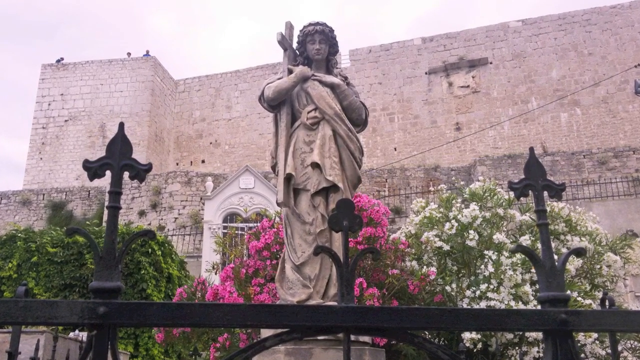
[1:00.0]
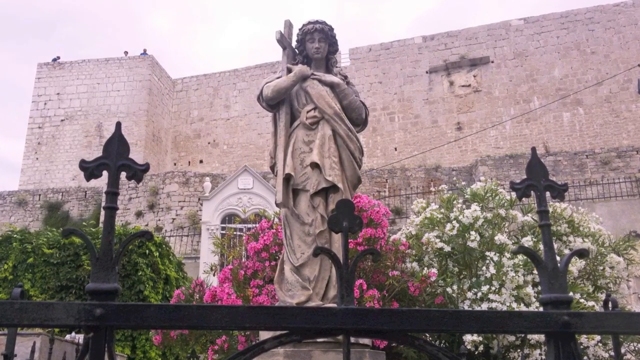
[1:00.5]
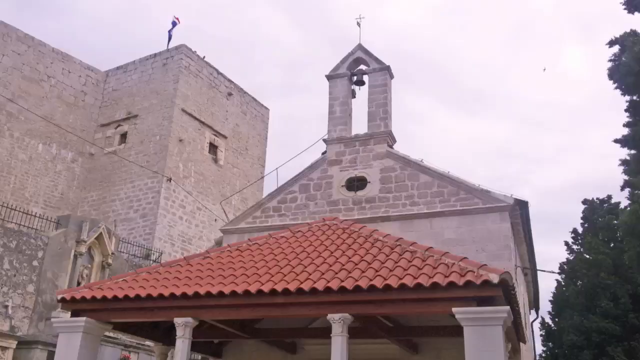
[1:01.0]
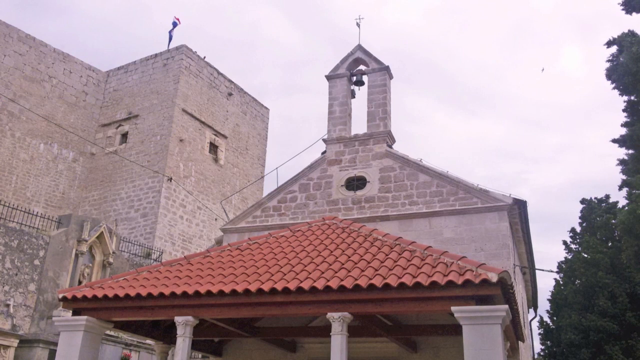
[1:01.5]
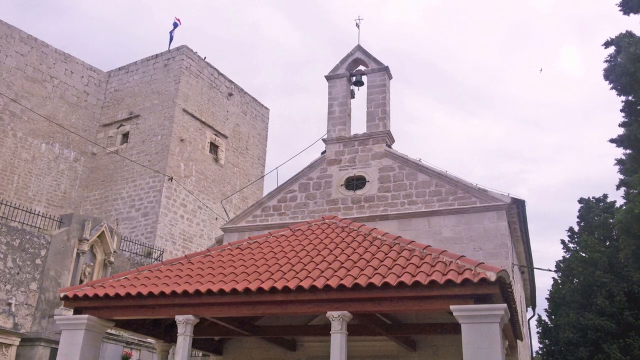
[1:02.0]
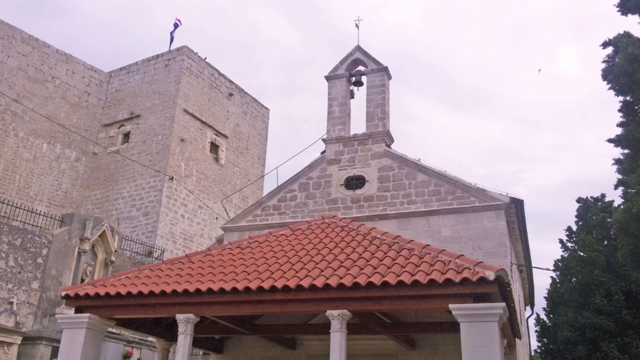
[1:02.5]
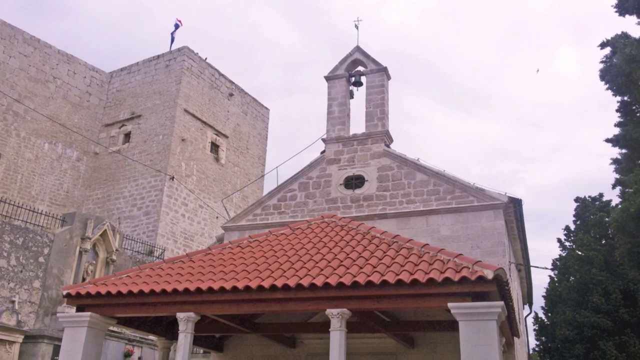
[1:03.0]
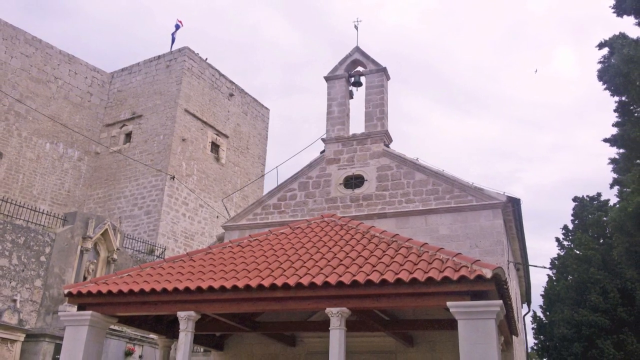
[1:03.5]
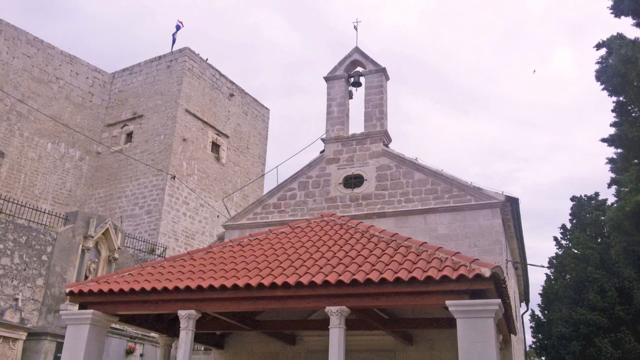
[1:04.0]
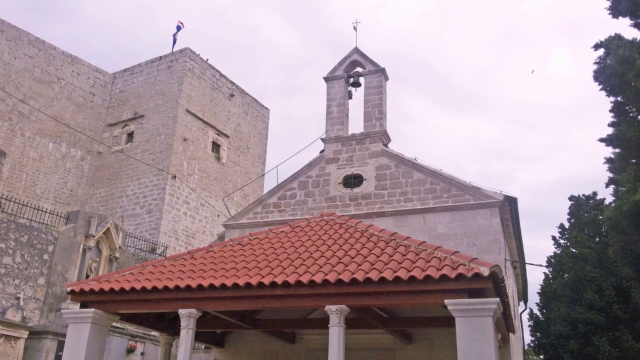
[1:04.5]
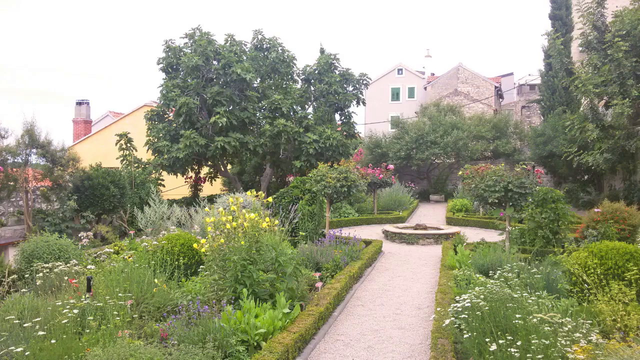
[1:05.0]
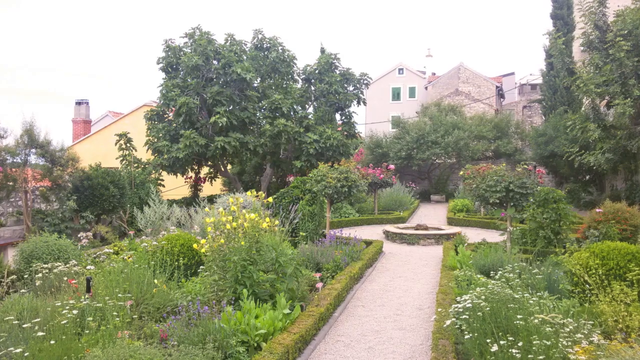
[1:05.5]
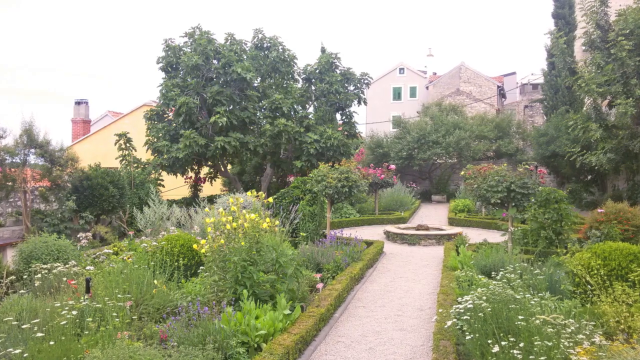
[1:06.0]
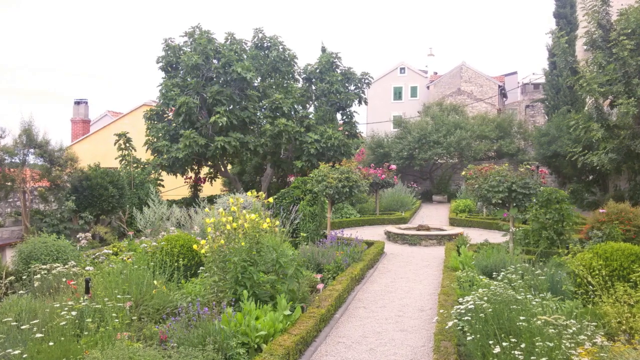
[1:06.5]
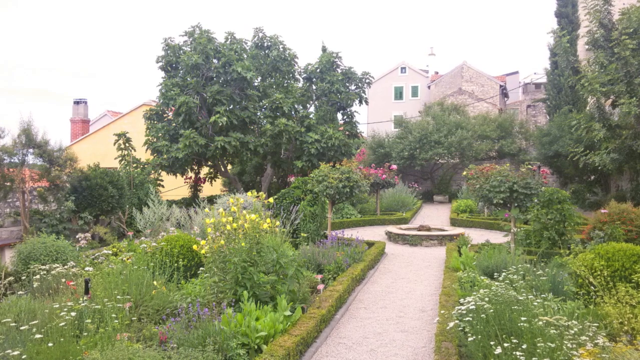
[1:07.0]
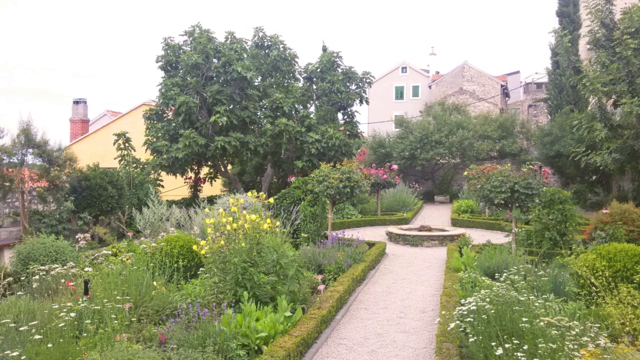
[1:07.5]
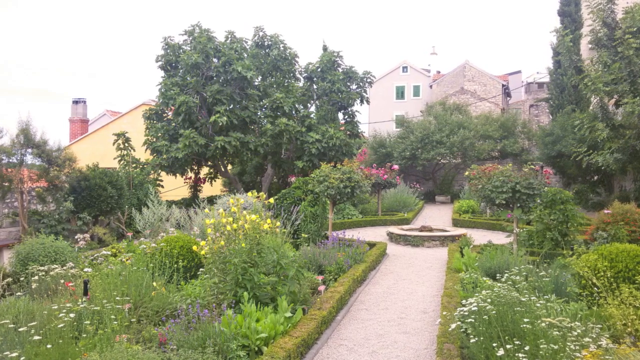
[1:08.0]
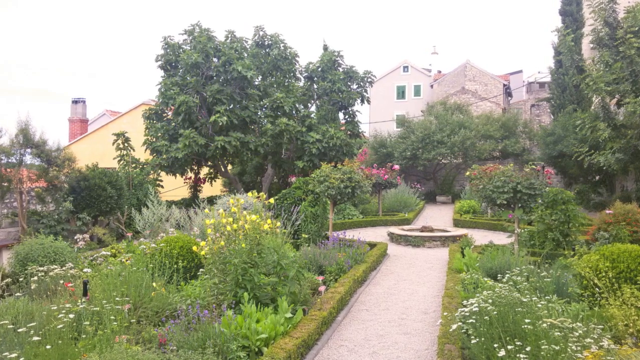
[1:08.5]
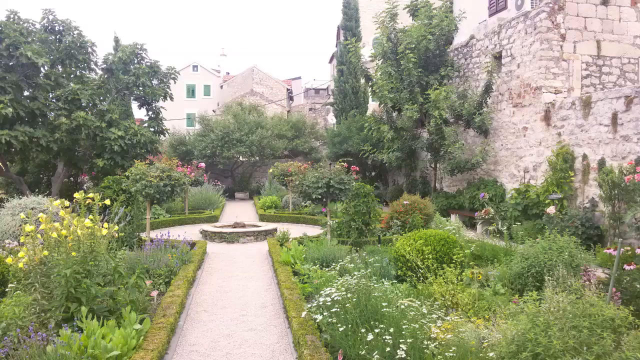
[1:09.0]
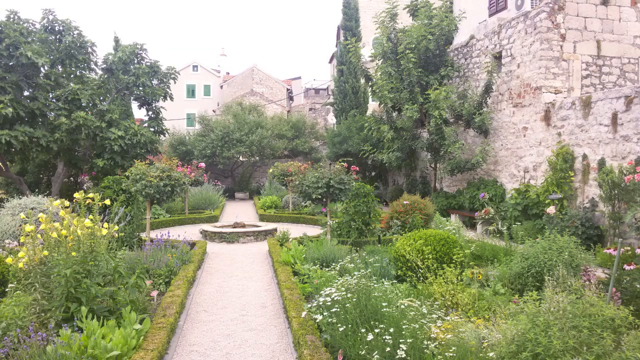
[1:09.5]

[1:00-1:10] The video starts on what looks like the top of a church steeple, made of gray brick and mortar, with a bell on top and what is maybe a flag flying above the bell. There are some trees on the side, and it is a very overcast day with what look like gray clouds in the background. To the left of the steeple is another building made of tan bricks, and in front is part of a roof in an orange color. The camera zooms out a little, then transitions to what looks like a garden: a walkway with trees and flowers on each side and some additional houses in the background. It very quickly cuts to a different angle of the same garden and then returns to the church steeple.